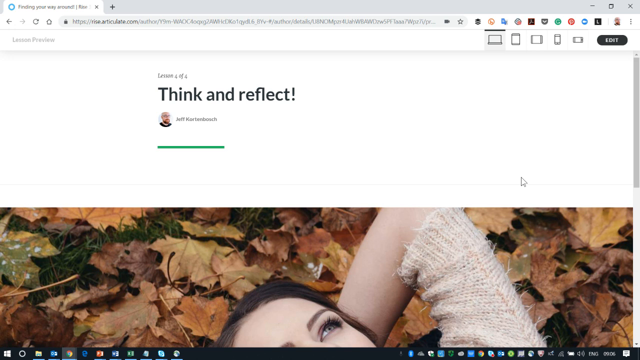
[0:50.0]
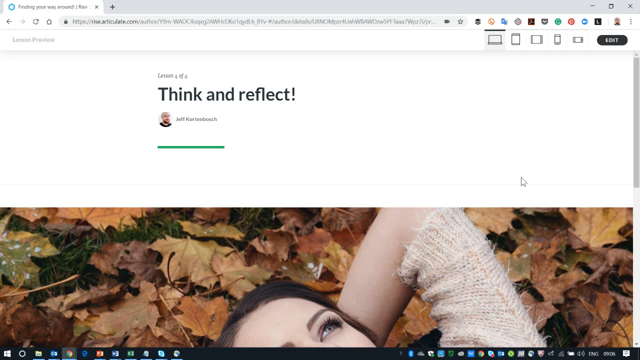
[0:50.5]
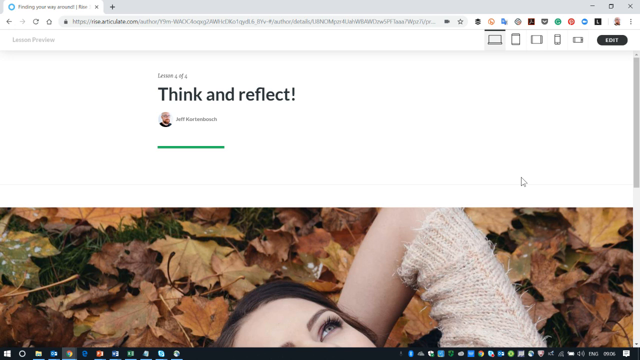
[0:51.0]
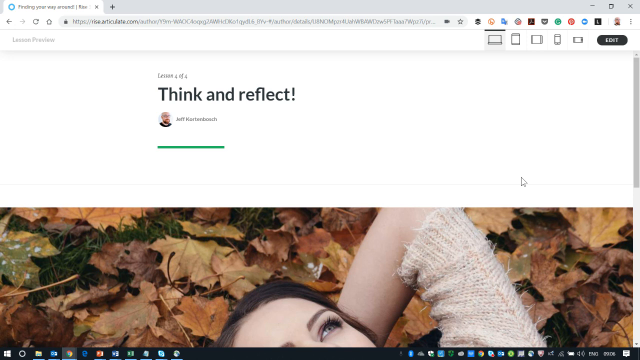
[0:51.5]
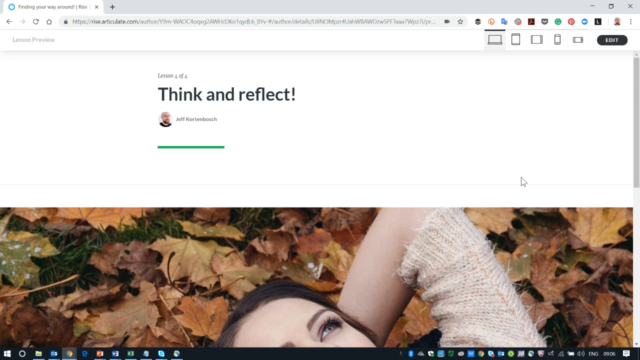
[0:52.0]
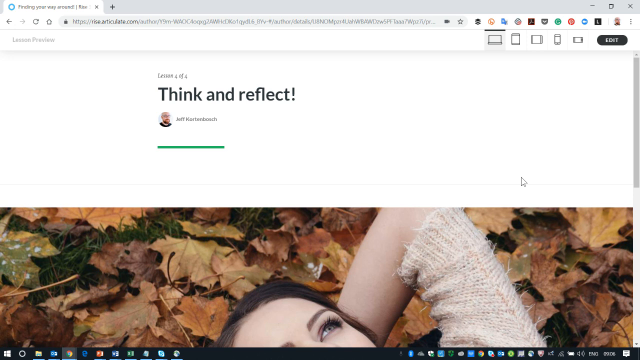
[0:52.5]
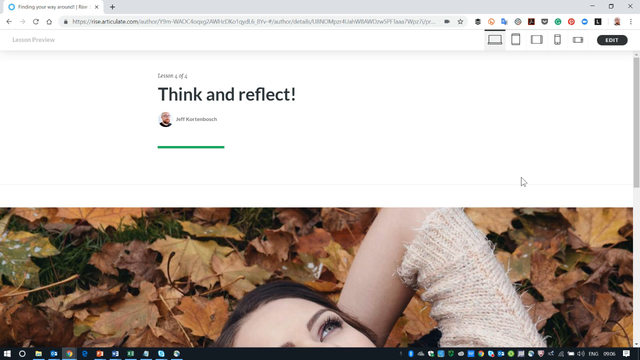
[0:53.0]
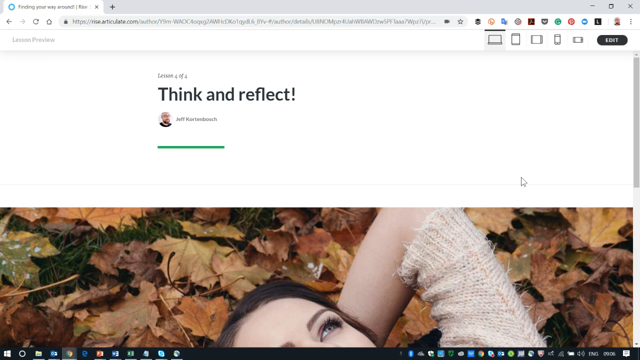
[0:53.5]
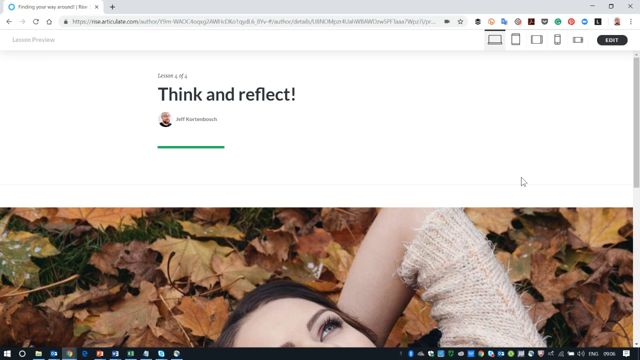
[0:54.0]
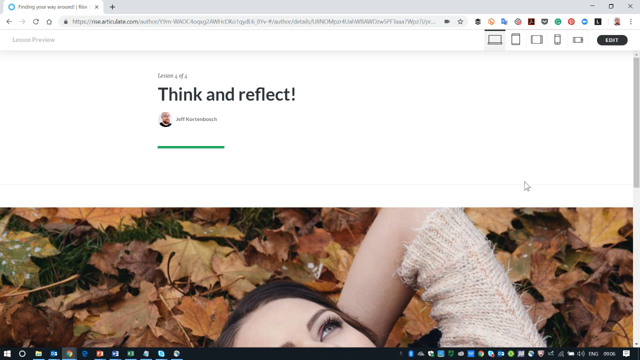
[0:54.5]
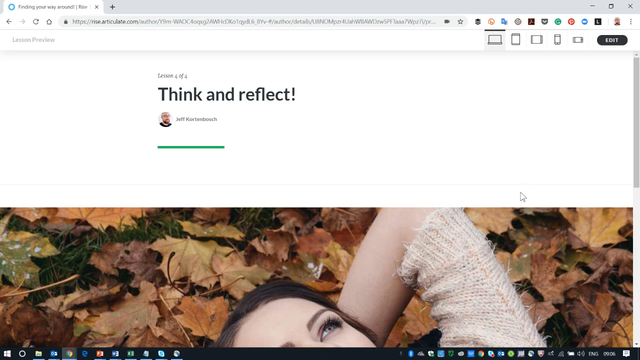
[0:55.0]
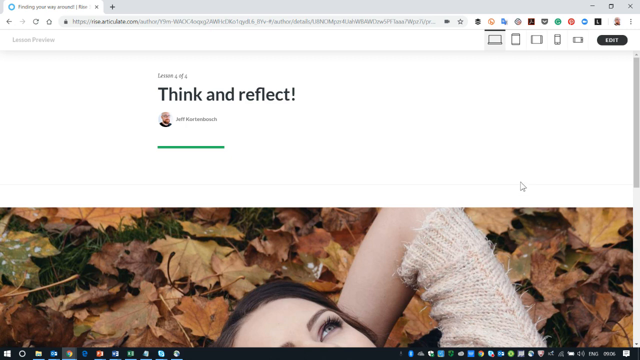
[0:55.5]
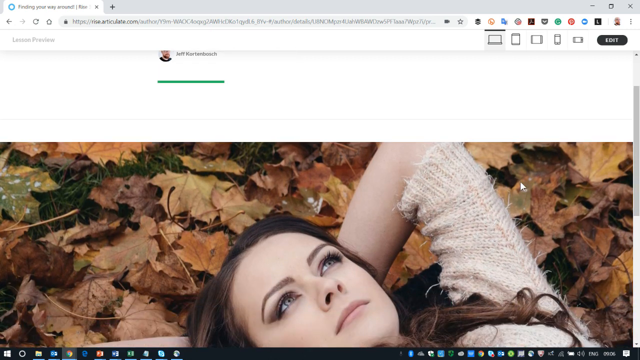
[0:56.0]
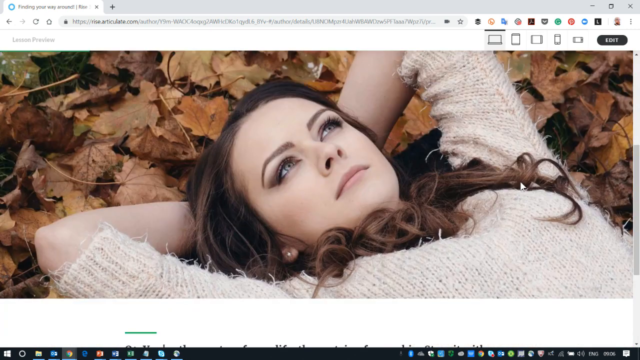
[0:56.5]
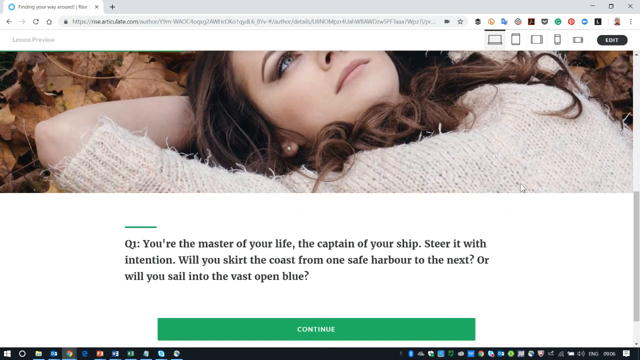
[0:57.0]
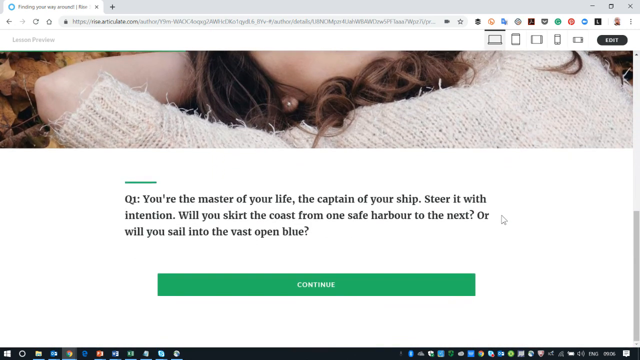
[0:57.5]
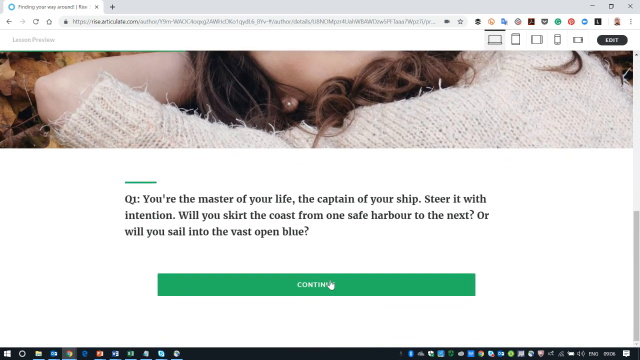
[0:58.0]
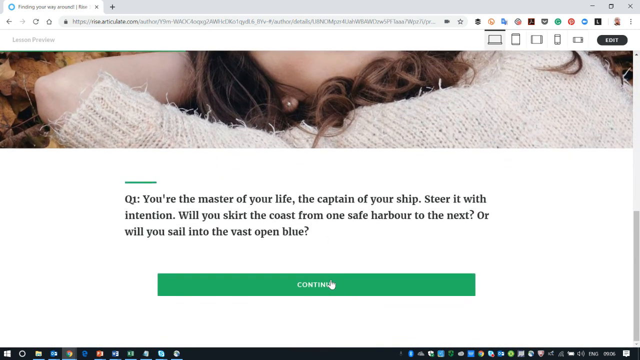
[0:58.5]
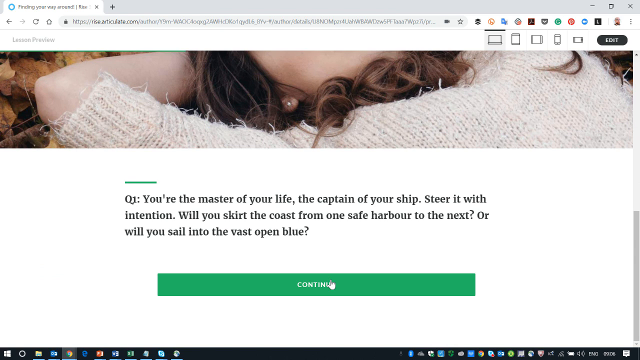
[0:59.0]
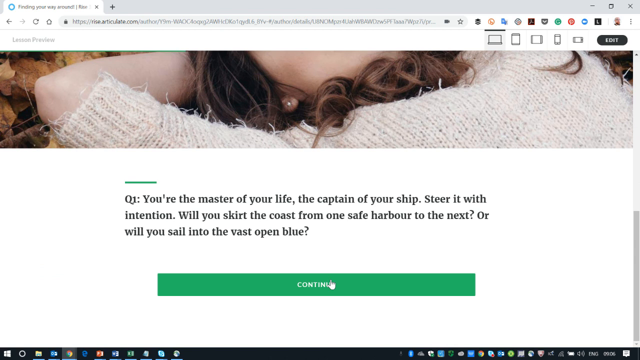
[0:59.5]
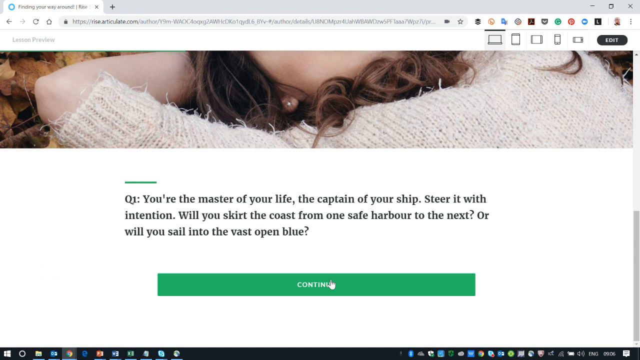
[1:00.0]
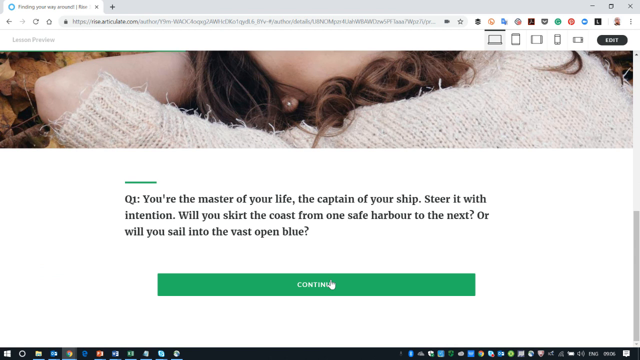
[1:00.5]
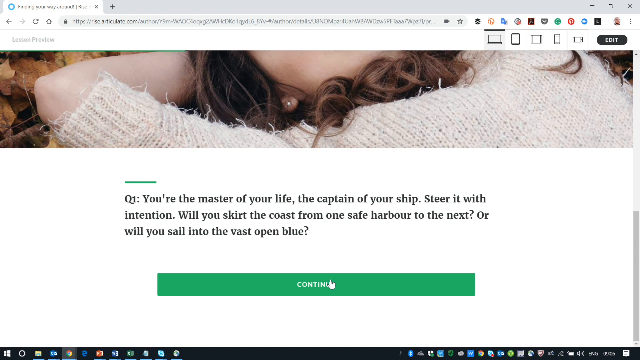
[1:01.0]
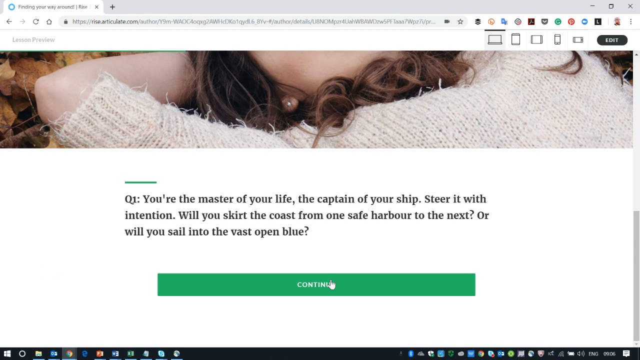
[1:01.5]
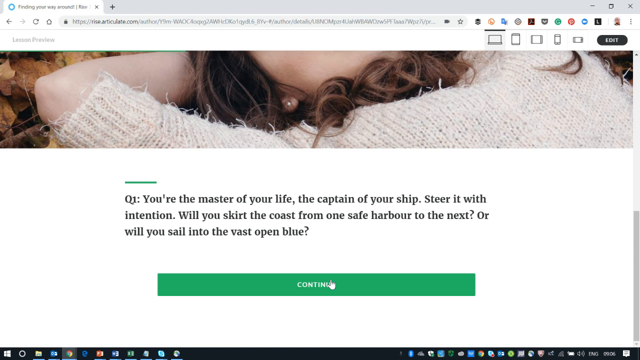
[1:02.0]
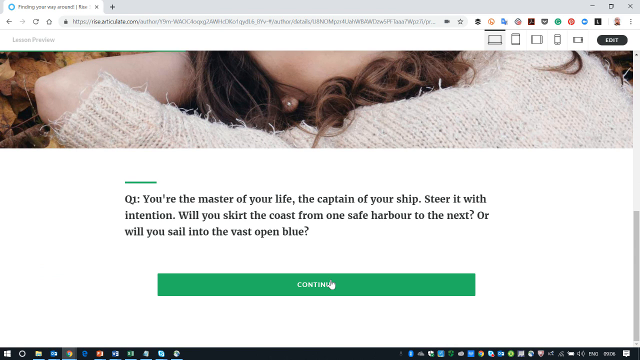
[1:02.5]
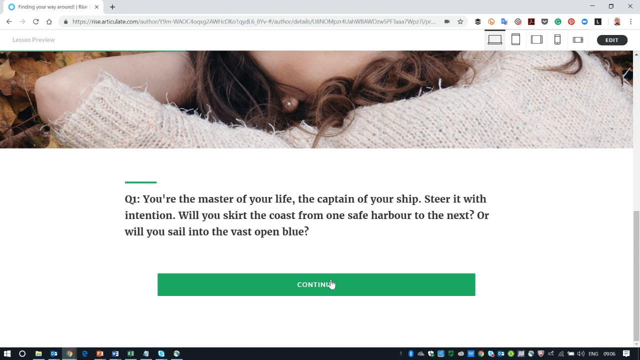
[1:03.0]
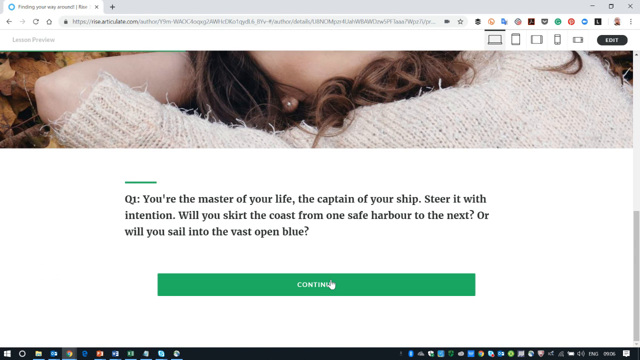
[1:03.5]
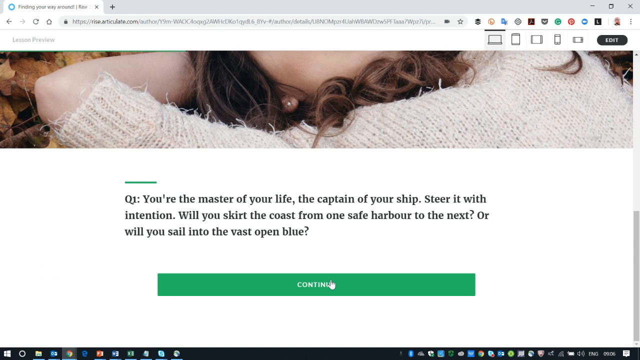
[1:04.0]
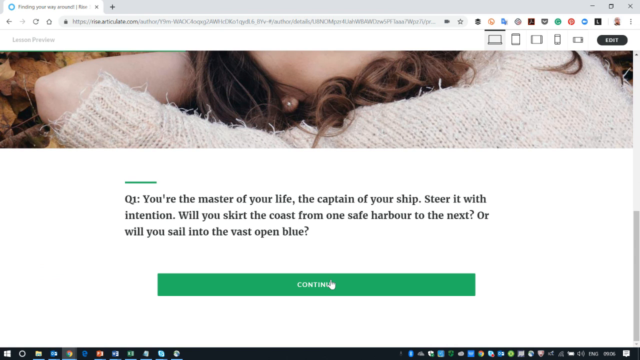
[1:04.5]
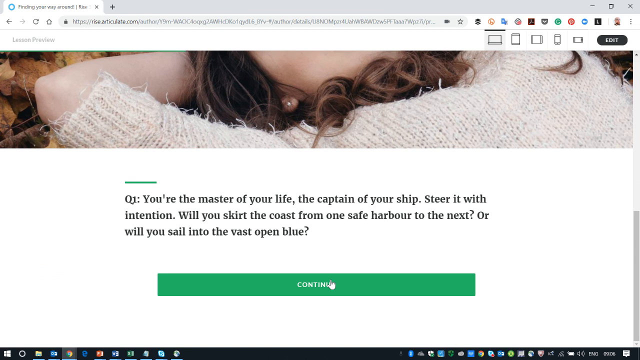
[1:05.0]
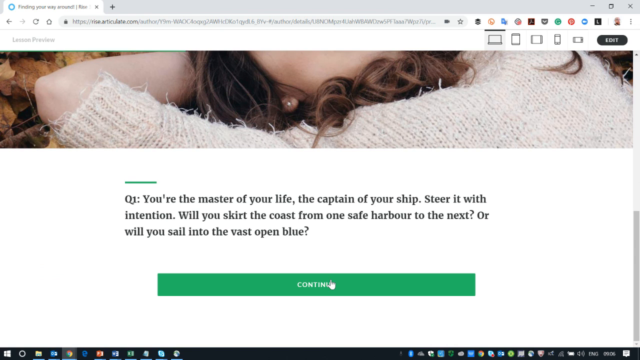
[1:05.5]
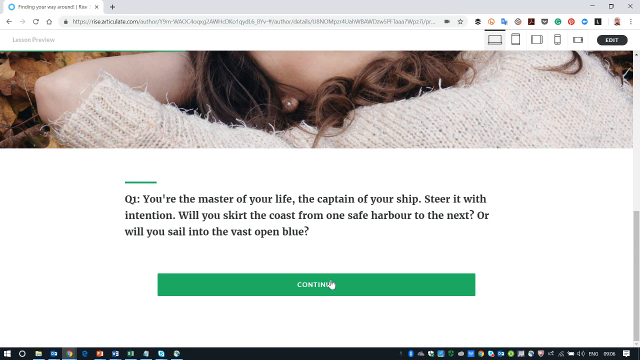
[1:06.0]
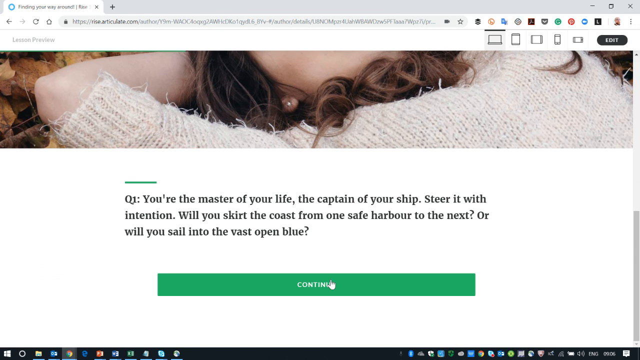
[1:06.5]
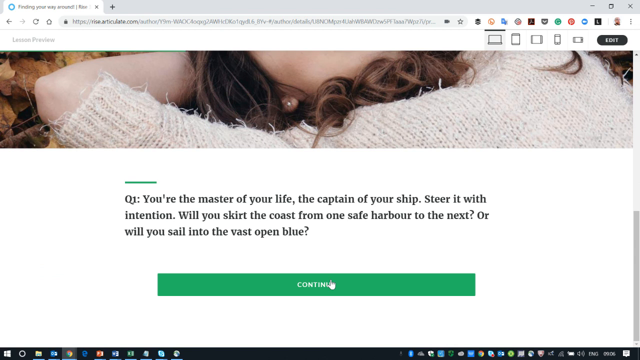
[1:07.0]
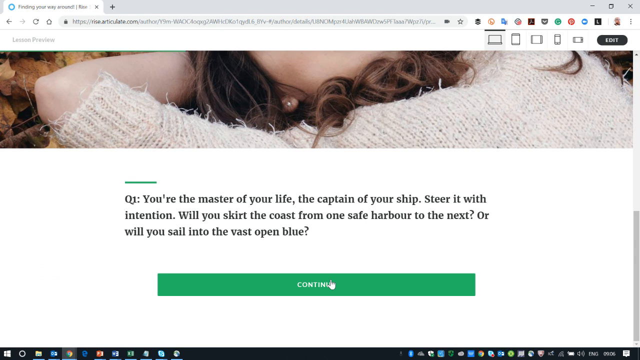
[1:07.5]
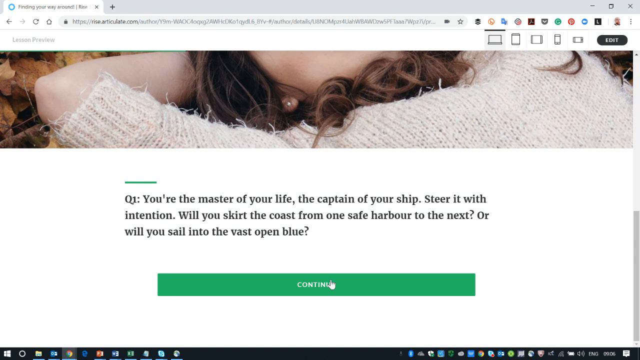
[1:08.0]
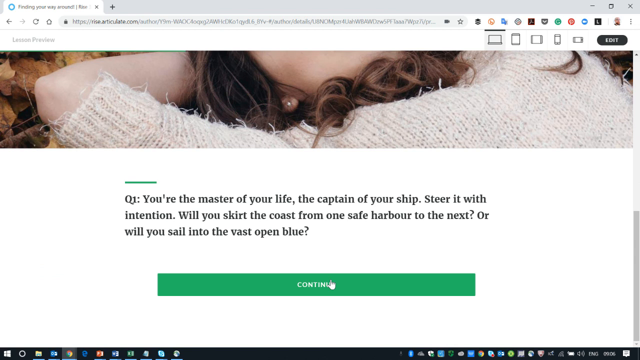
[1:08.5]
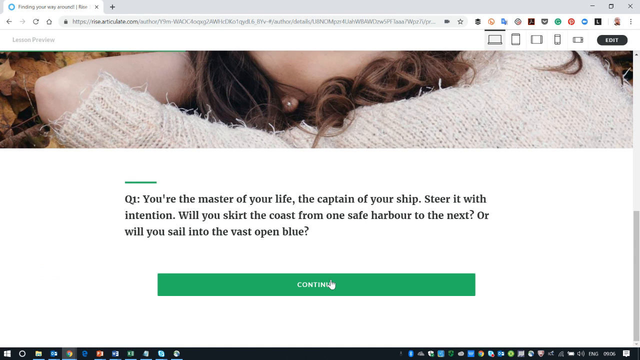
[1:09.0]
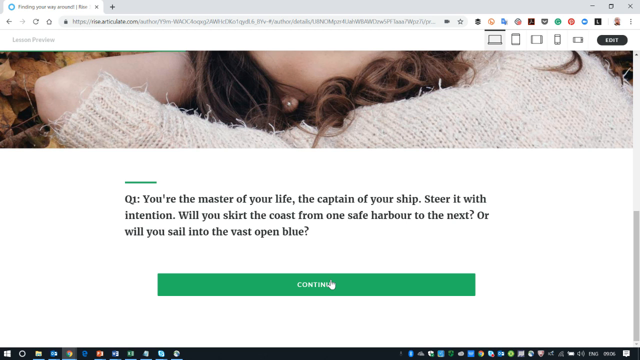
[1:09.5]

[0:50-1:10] A picture shows the lady lying down on ground with some leaves, wearing a white sweater and earrings, with her hat on her head. She is in deep thought. The first question appears: "You are the master of your life, the captain of your ship, steer it with intention. Will you skirt the coast from one safe harbour to the next, or will you sail into the vast open blue?" A green continue button is pressed.